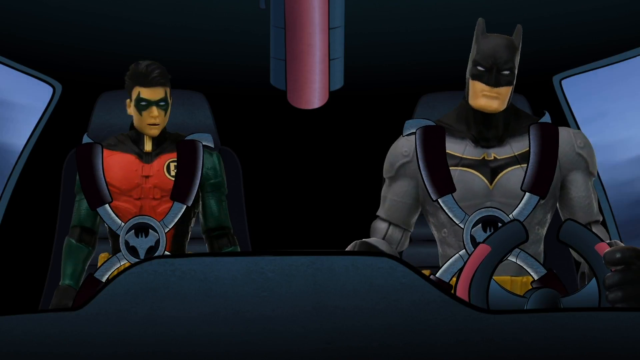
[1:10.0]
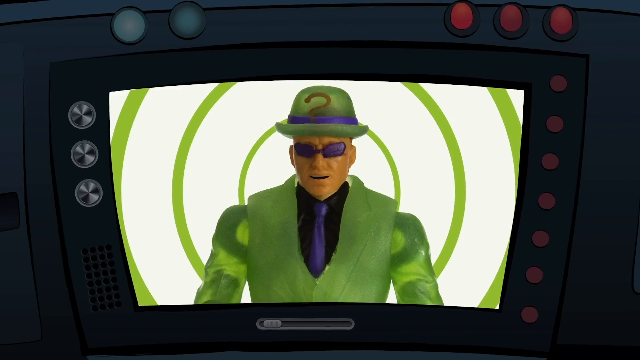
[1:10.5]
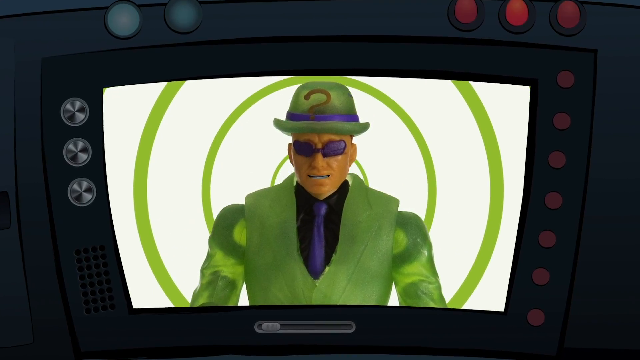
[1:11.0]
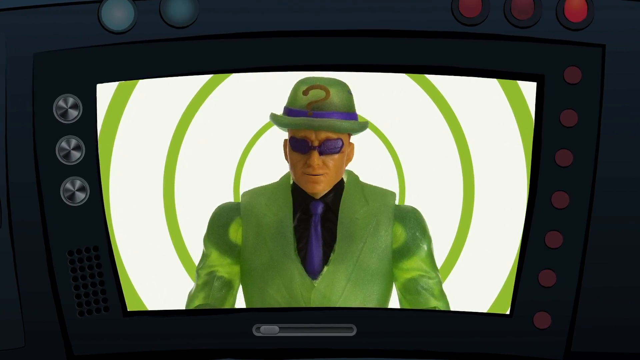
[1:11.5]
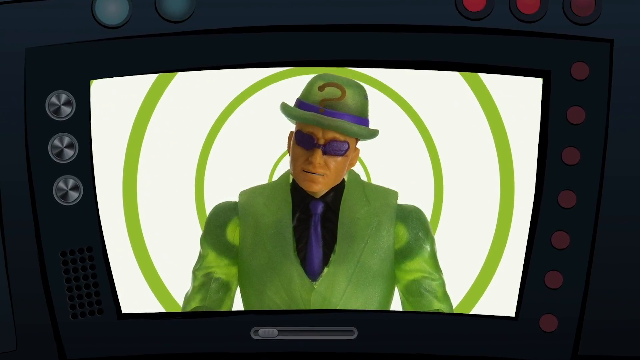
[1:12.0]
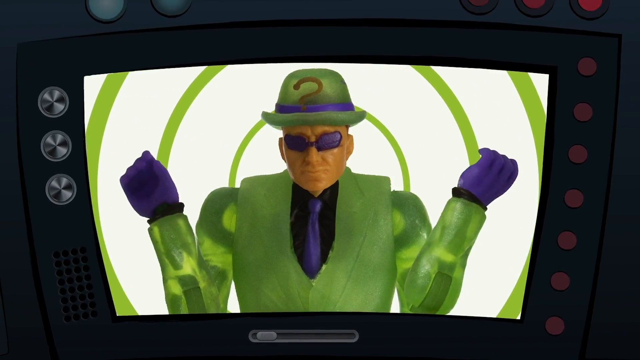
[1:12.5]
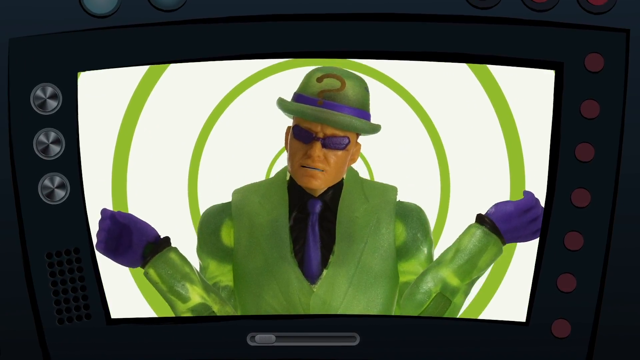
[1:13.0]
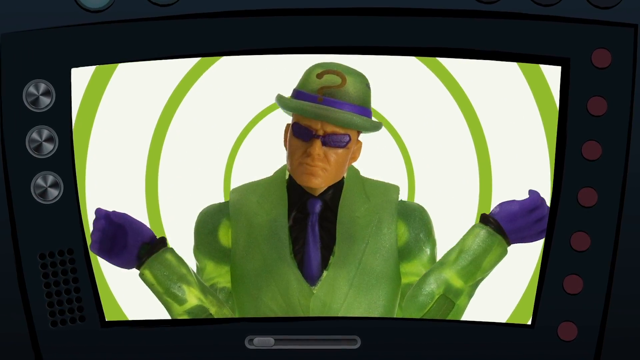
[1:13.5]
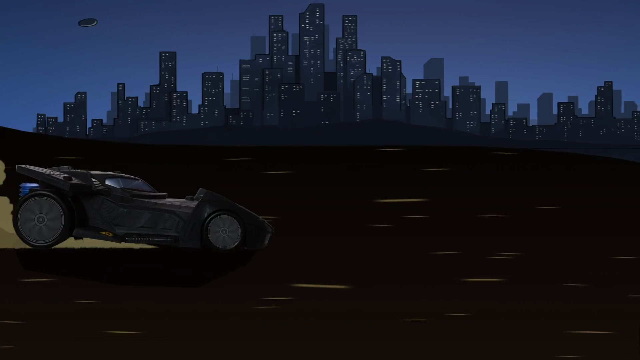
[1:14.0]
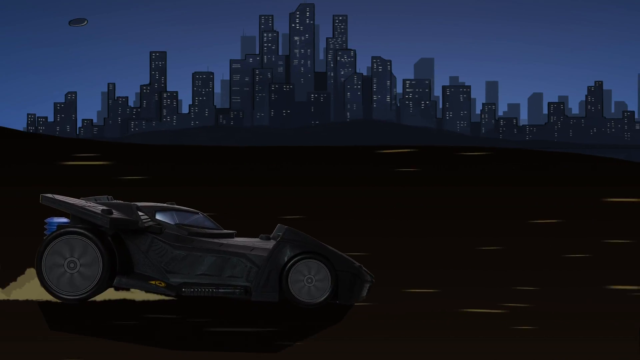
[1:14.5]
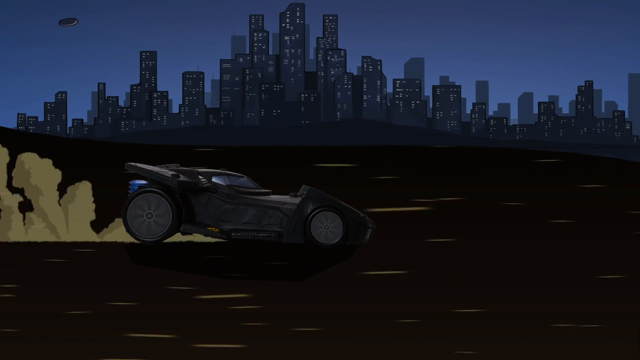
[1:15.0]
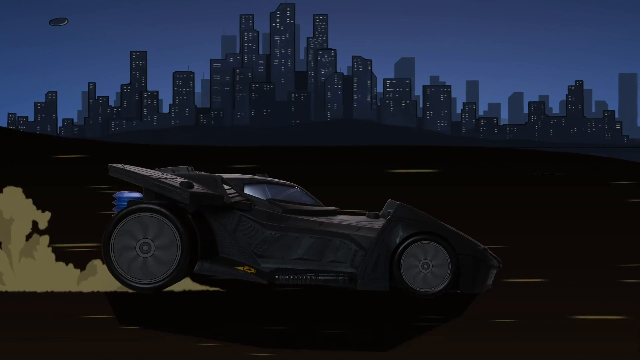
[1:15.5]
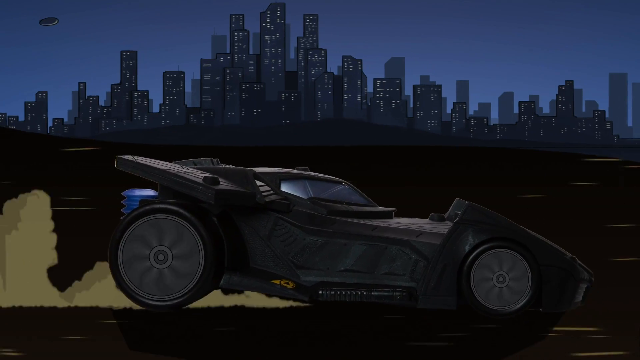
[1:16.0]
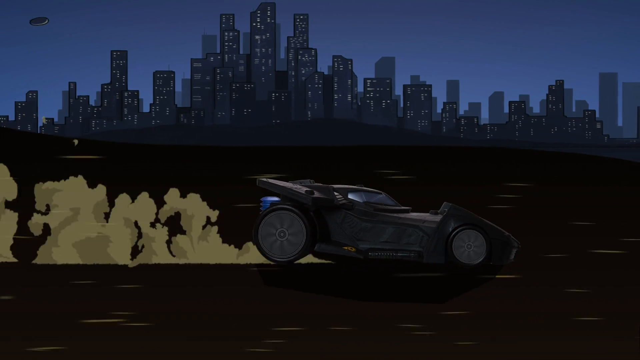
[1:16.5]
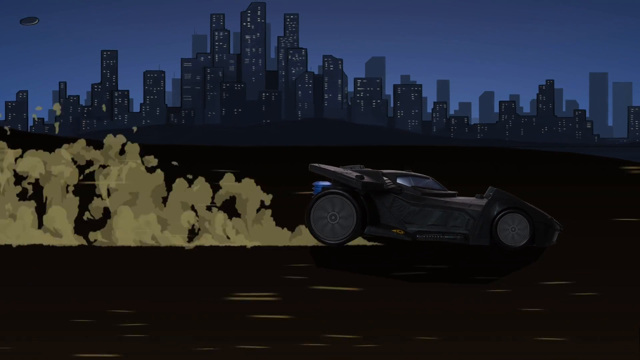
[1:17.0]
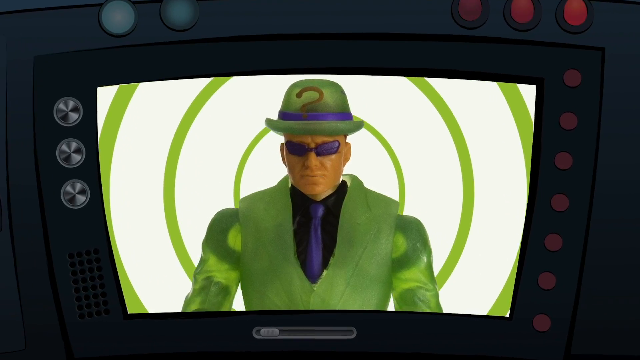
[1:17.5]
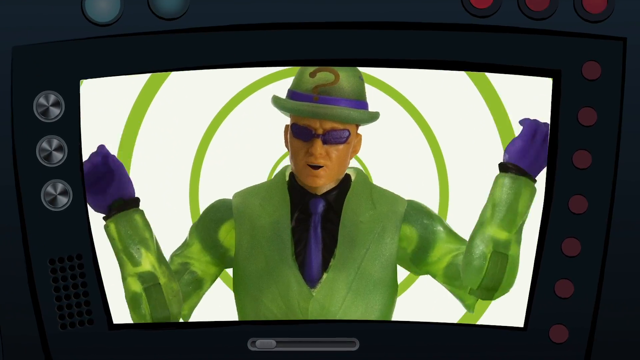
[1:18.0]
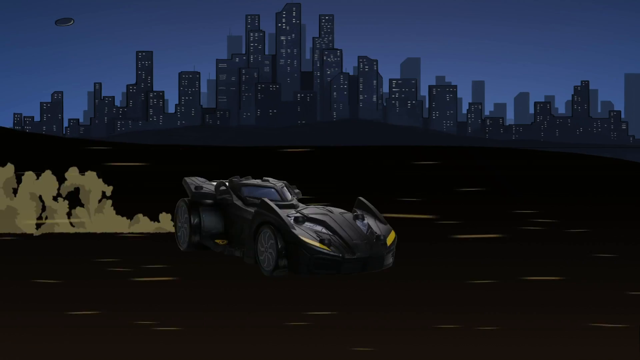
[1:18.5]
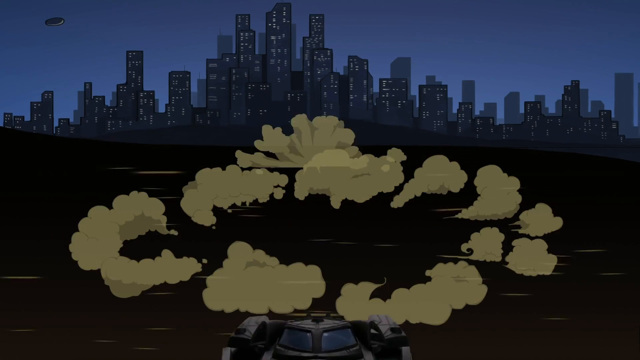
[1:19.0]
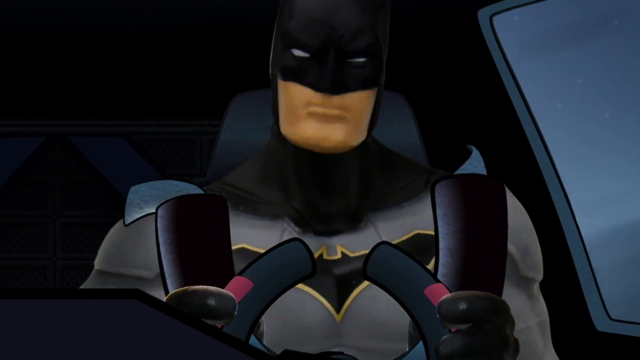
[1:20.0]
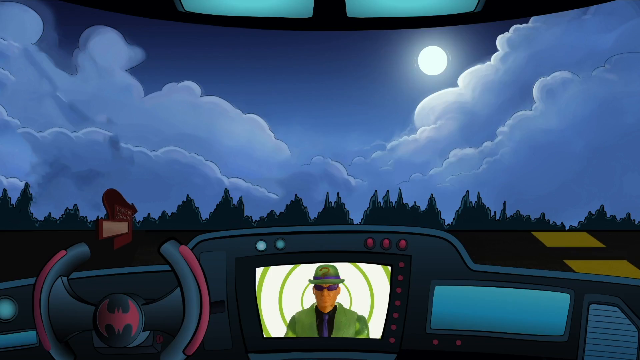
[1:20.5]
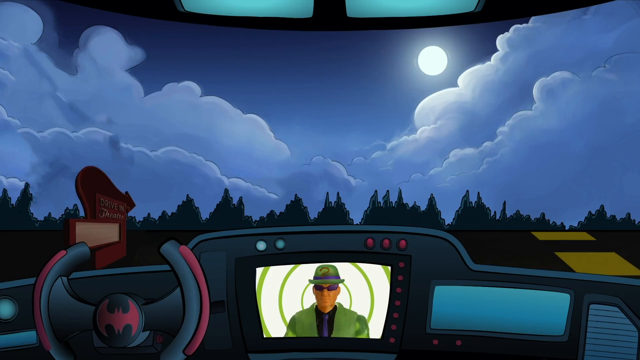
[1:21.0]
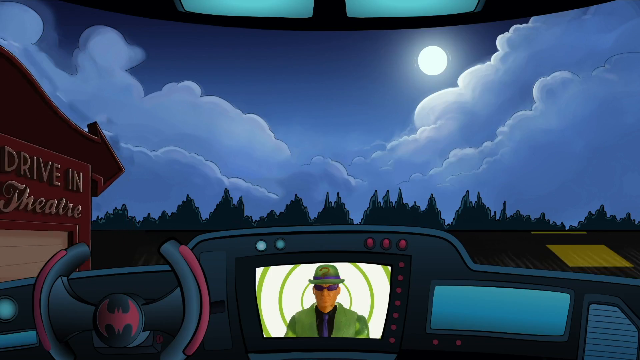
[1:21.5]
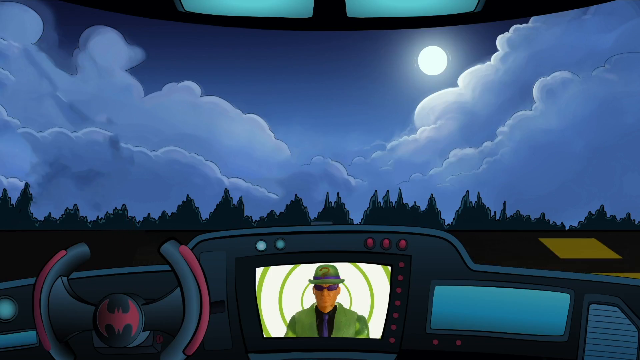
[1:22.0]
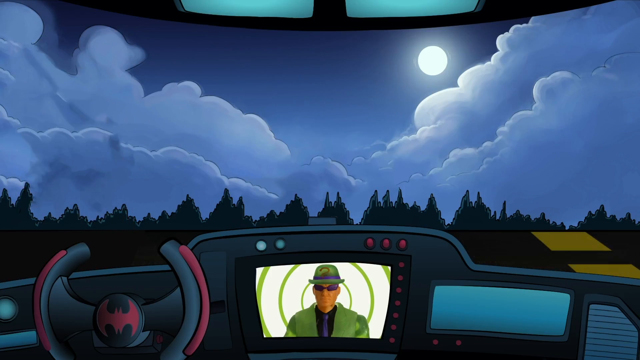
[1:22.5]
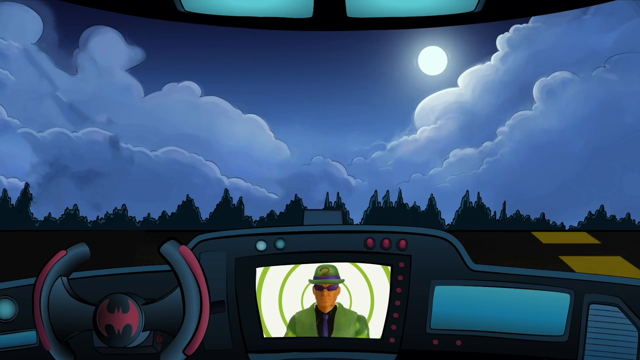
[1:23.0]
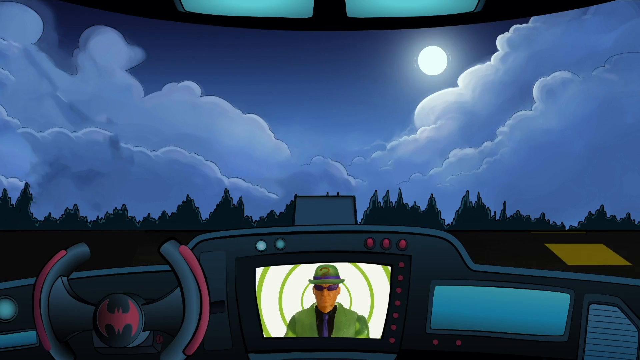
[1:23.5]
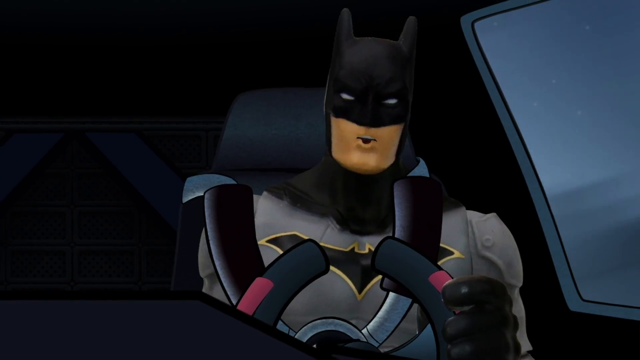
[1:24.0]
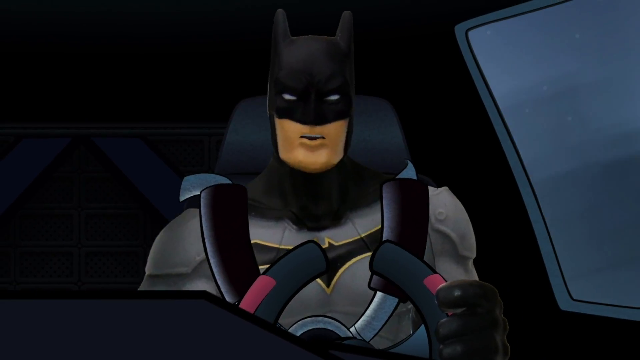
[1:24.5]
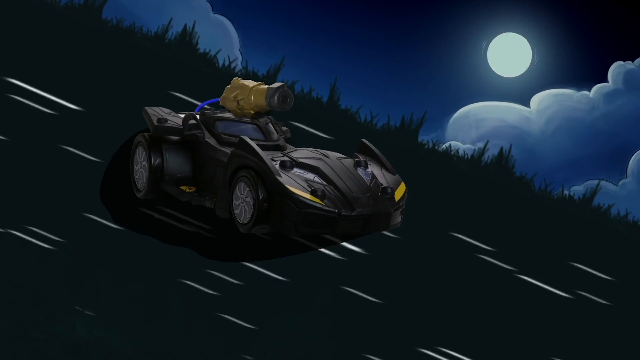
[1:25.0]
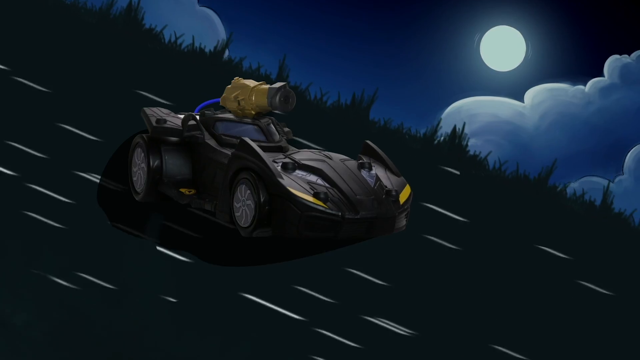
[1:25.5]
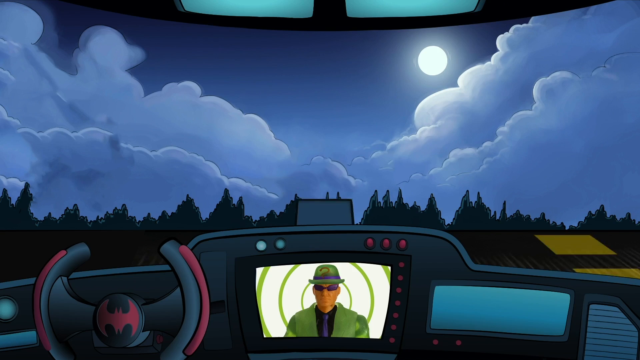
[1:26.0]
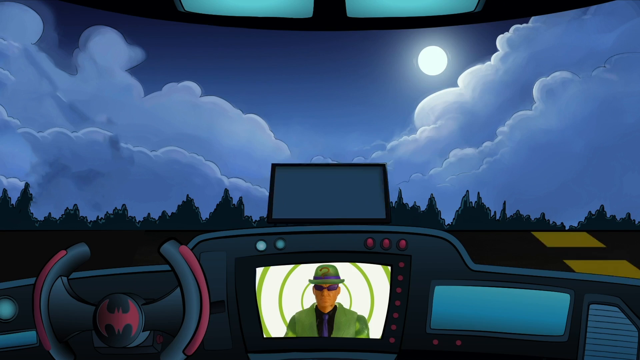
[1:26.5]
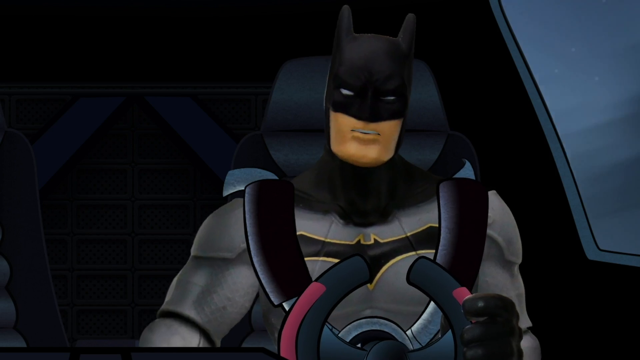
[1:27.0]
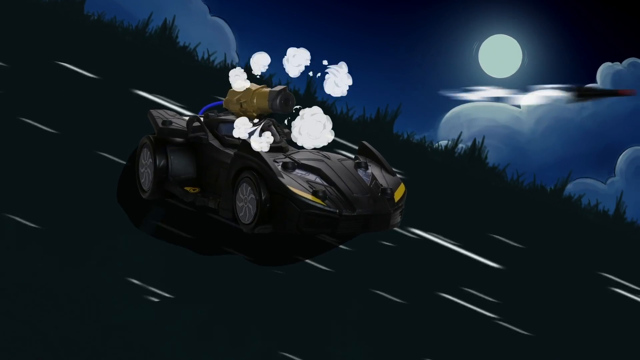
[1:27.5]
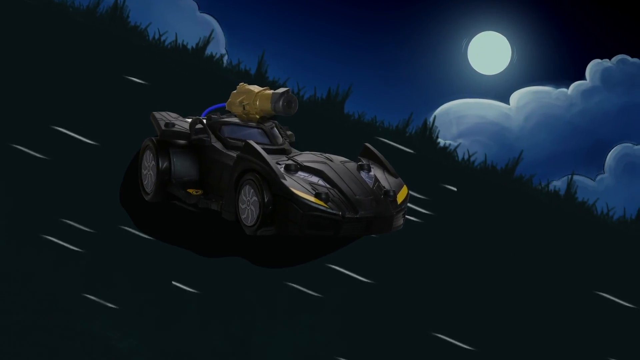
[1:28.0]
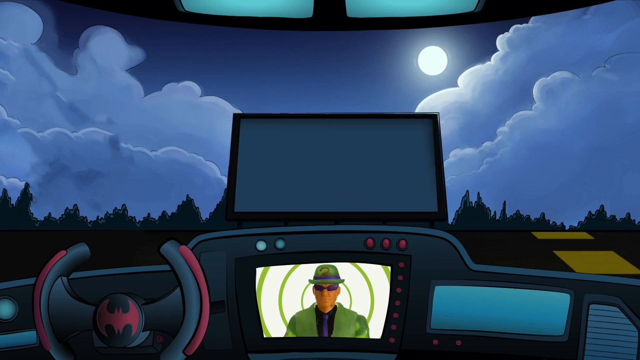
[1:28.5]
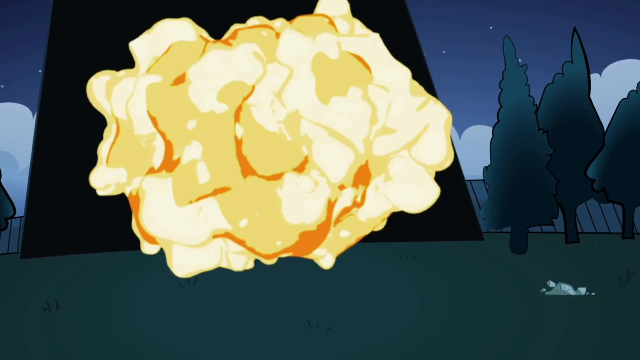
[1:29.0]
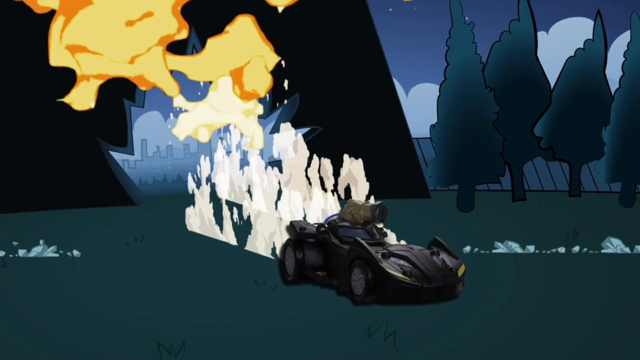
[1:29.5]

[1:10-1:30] Batman and Robin, 3D animated characters like action figures or claymation of some sort, sit strapped into a completely 2D-drawn Batmobile with drawn seatbelts and a drawn steering wheel. The view goes to the Riddler on the screen inside the car, in front of a hypnotic green spiral background; a close-up shows him talking and shrugging his shoulders. Outside, the Batmobile, like an action figure or claymation model, drives on a drawn 2D background, skirting along the Gotham City skyline and possibly going off-road. It drives very quickly to the right and zooms off. A drawn view from inside the car shows the full moon in the background, the road, and a drive-in theater ahead of where Batman is driving. Batman hits a button, a cannon pops up on top of the Batmobile, and it shoots a rocket at what appears to be a drive-in theater wall, and the Batmobile goes through the hole it makes.